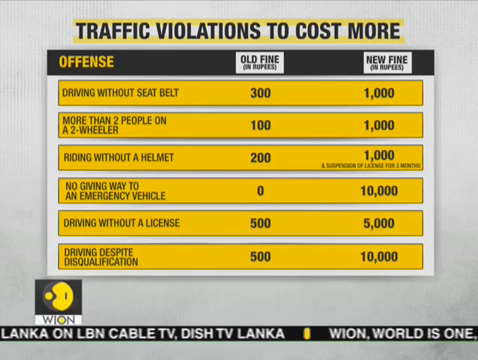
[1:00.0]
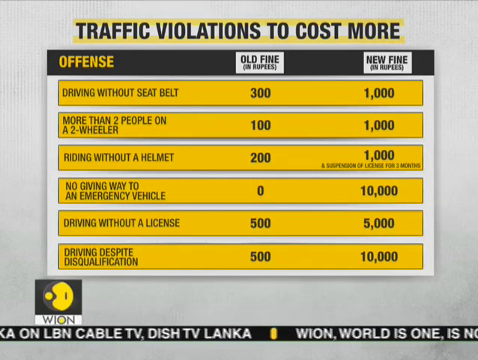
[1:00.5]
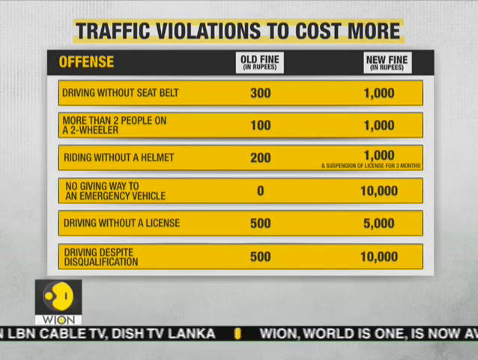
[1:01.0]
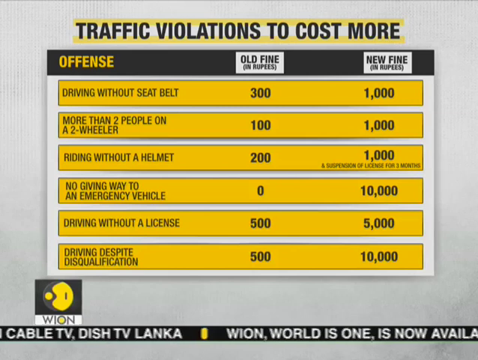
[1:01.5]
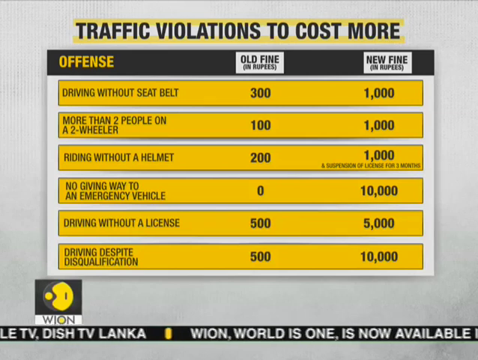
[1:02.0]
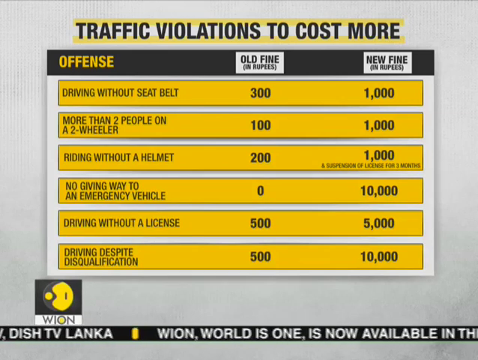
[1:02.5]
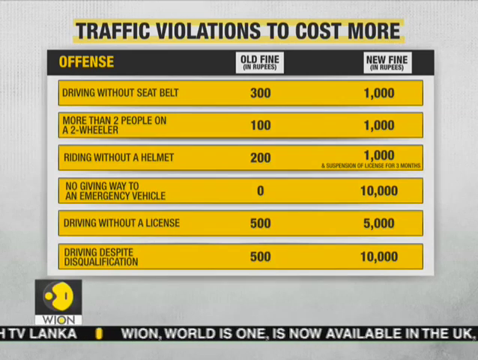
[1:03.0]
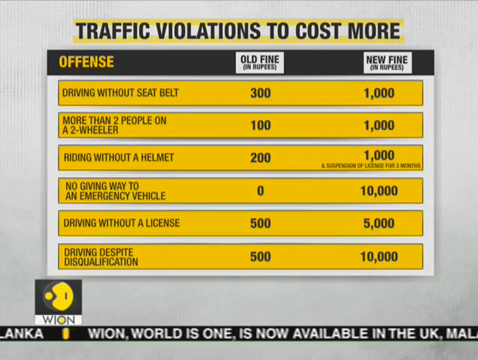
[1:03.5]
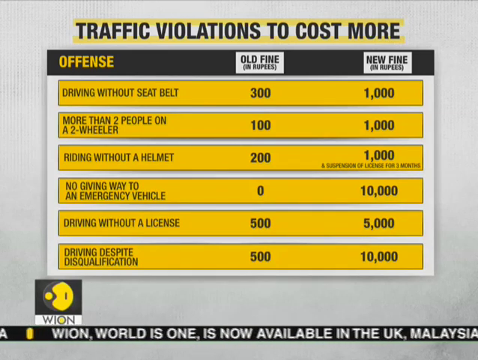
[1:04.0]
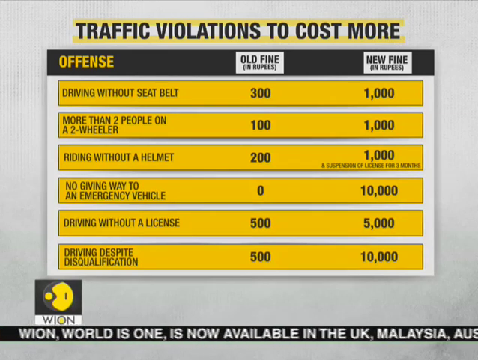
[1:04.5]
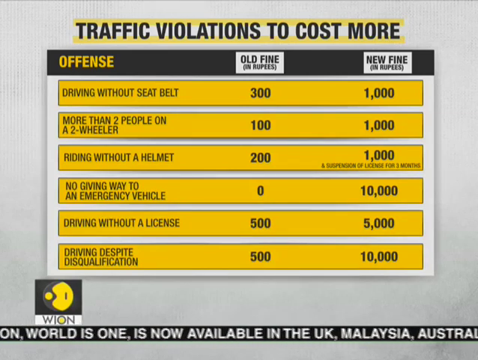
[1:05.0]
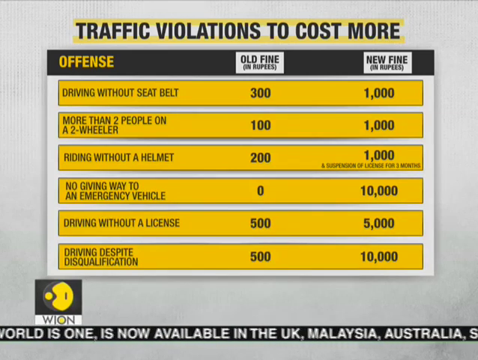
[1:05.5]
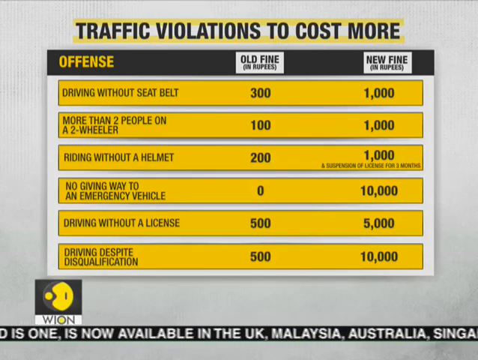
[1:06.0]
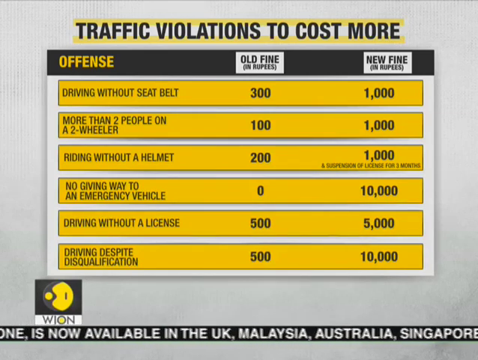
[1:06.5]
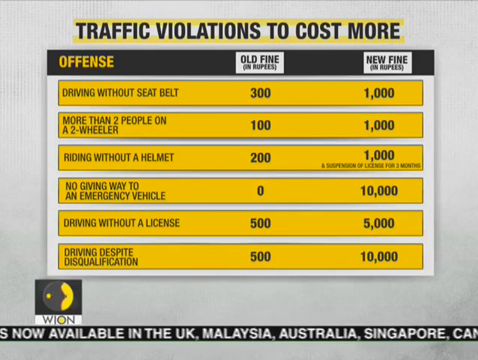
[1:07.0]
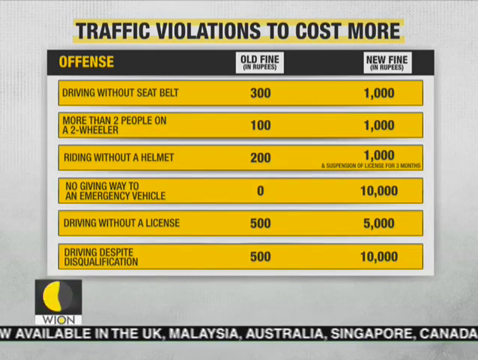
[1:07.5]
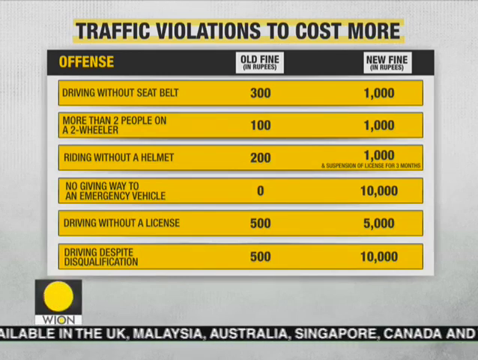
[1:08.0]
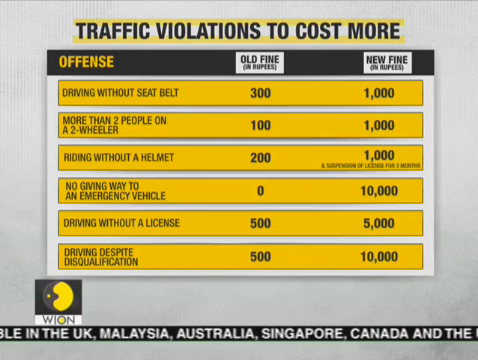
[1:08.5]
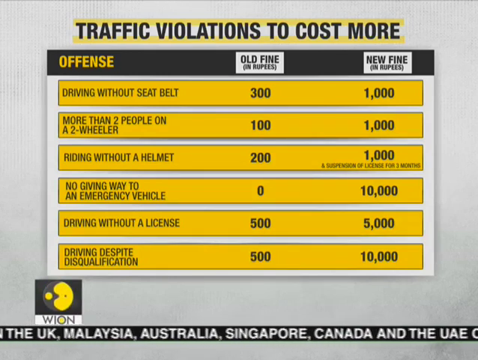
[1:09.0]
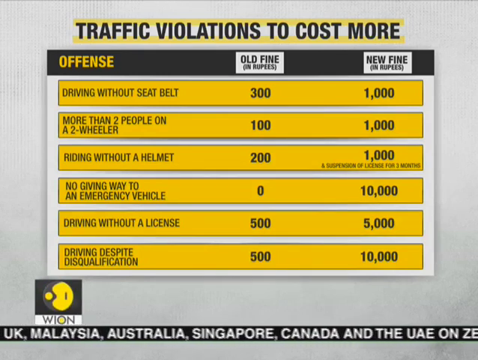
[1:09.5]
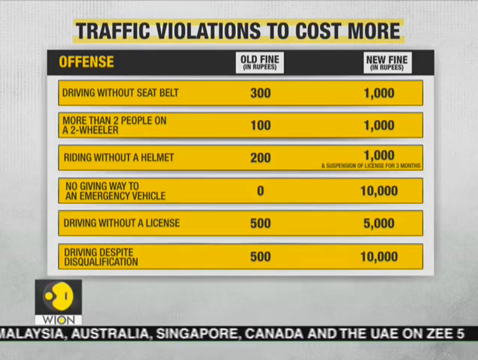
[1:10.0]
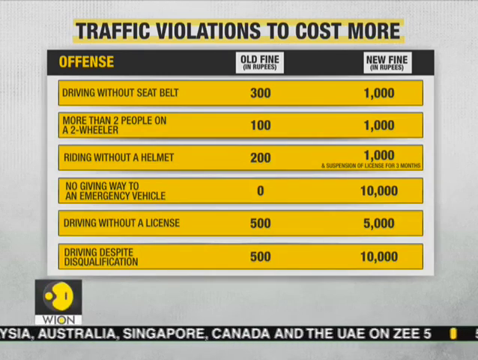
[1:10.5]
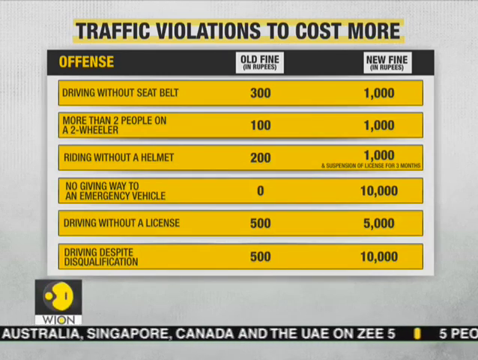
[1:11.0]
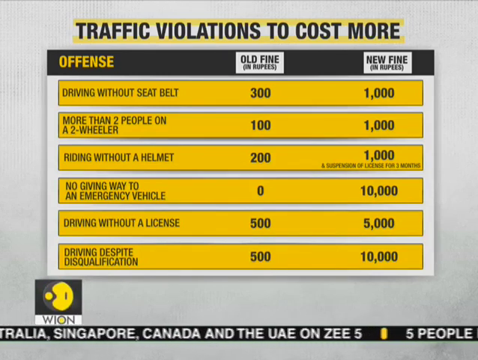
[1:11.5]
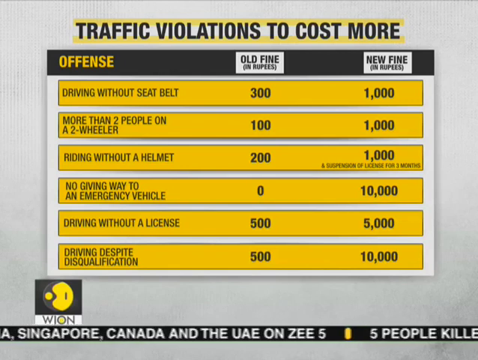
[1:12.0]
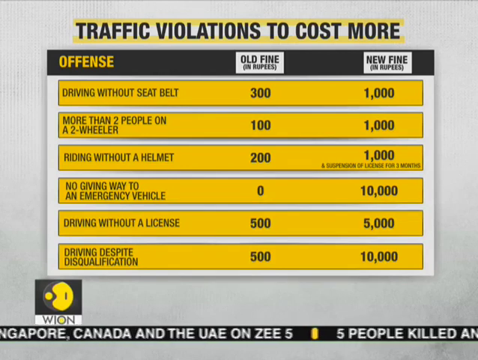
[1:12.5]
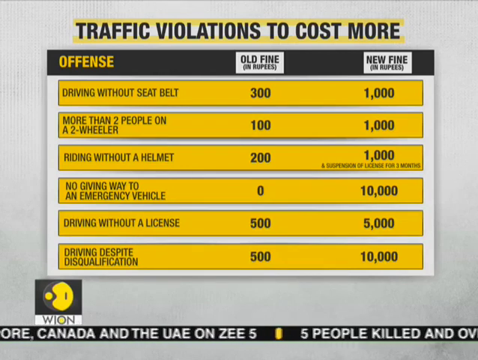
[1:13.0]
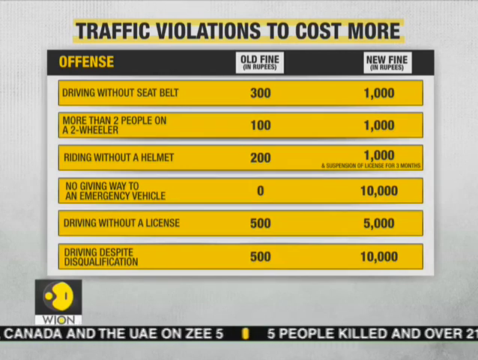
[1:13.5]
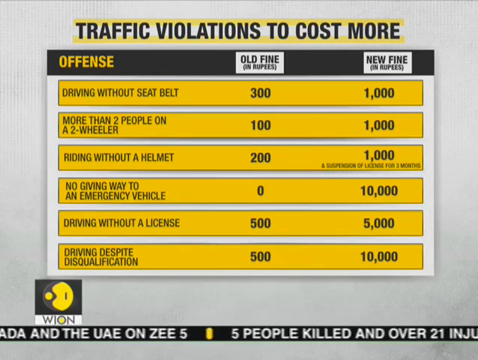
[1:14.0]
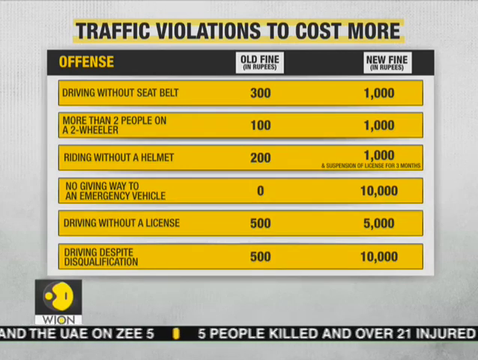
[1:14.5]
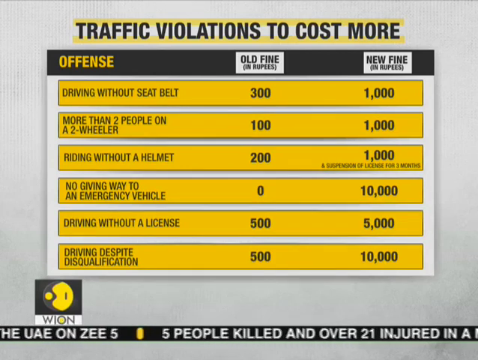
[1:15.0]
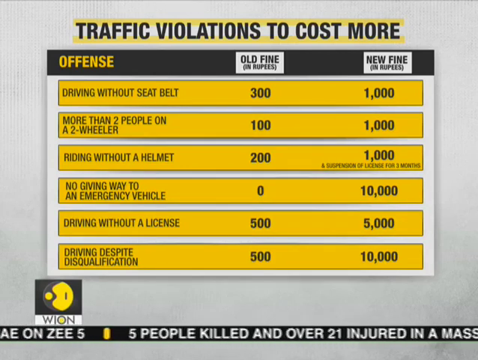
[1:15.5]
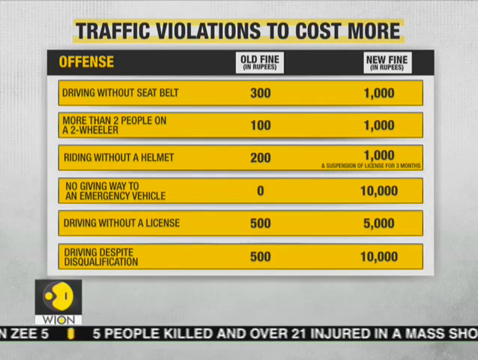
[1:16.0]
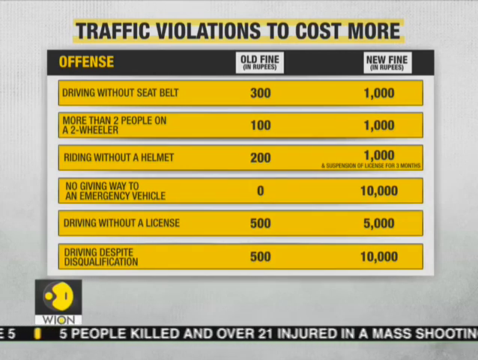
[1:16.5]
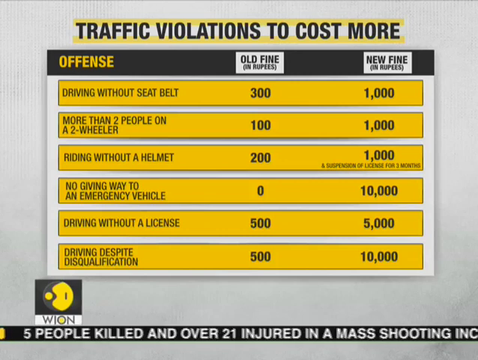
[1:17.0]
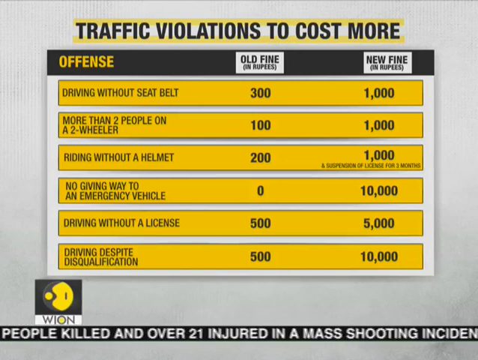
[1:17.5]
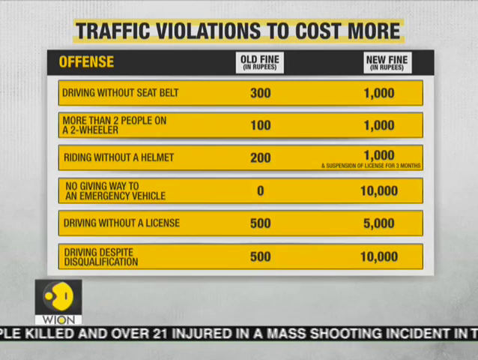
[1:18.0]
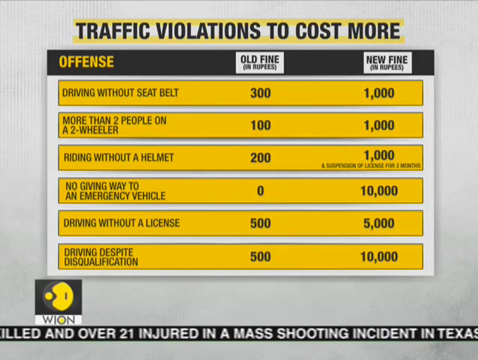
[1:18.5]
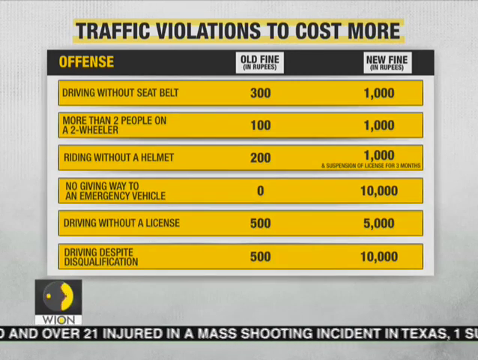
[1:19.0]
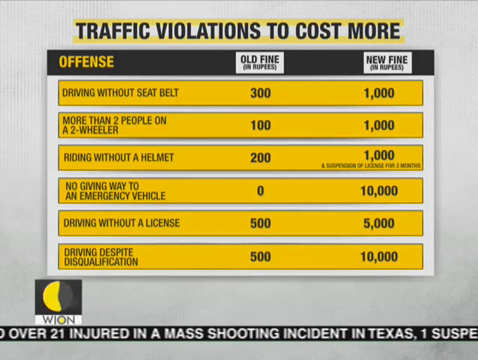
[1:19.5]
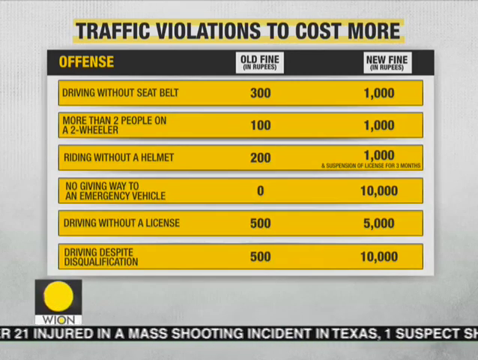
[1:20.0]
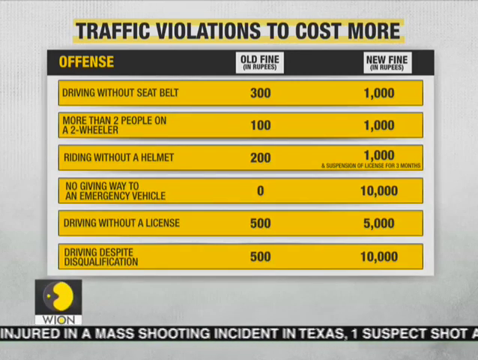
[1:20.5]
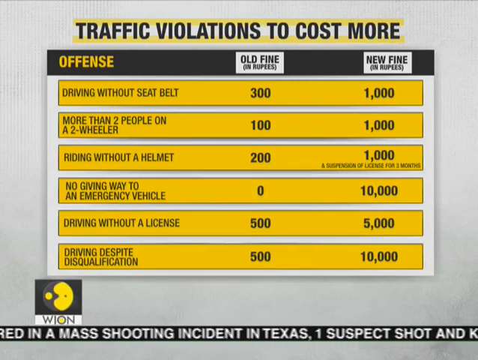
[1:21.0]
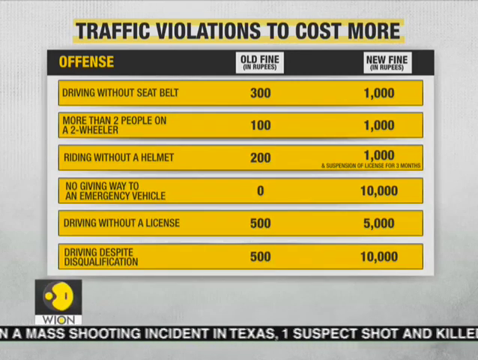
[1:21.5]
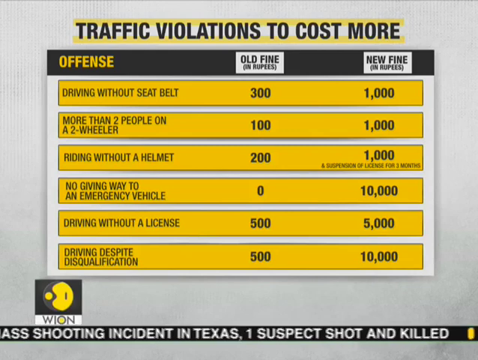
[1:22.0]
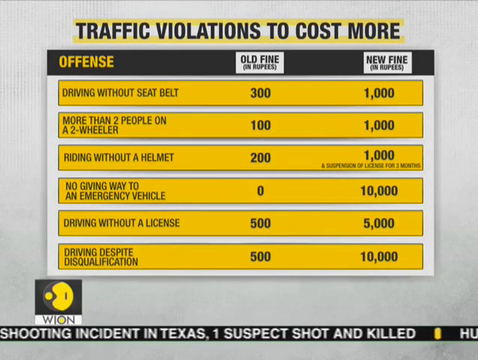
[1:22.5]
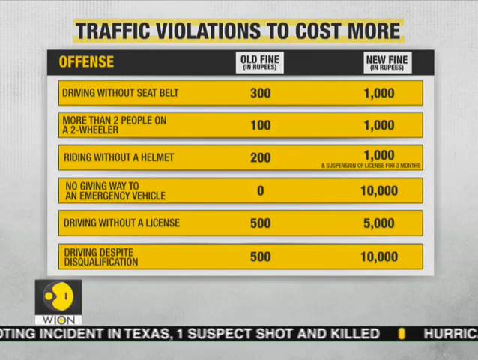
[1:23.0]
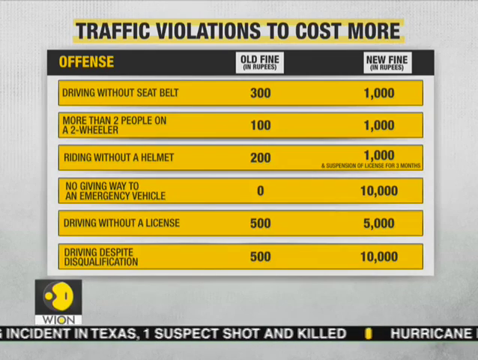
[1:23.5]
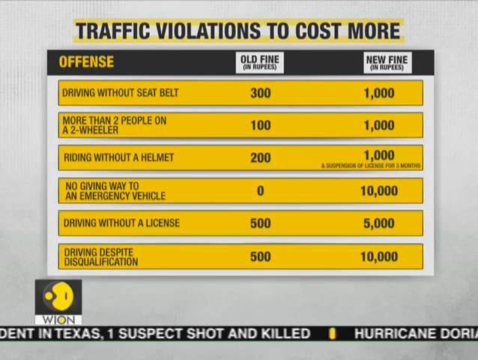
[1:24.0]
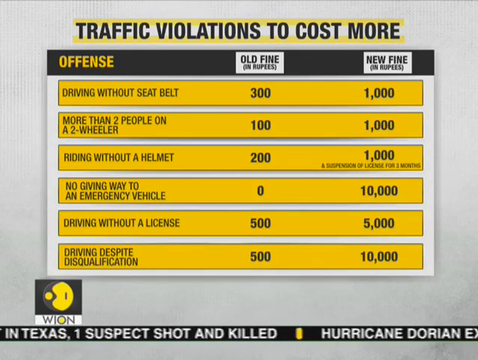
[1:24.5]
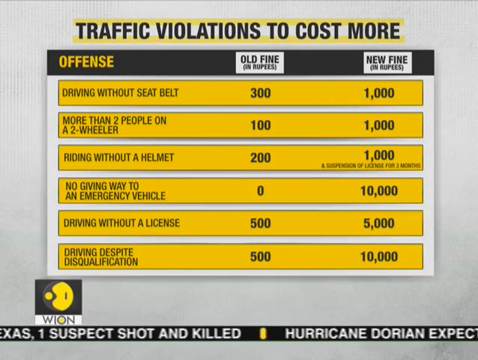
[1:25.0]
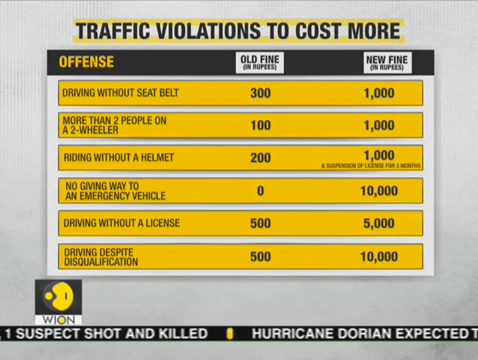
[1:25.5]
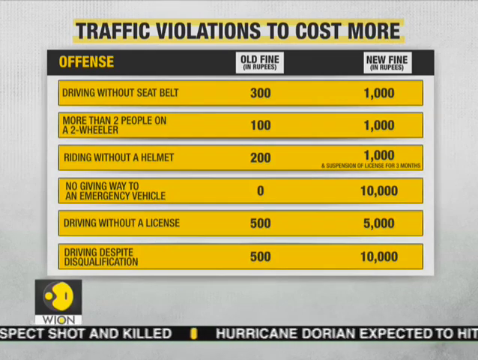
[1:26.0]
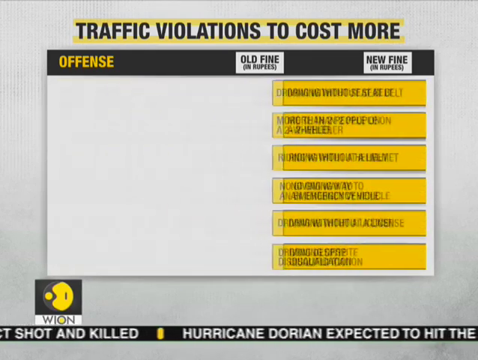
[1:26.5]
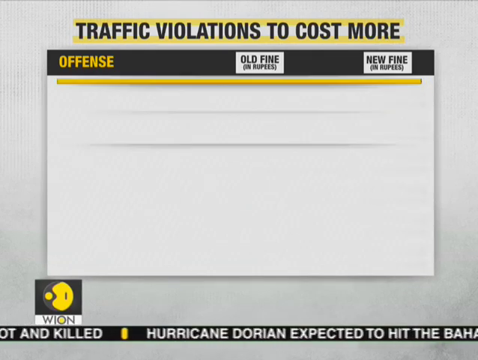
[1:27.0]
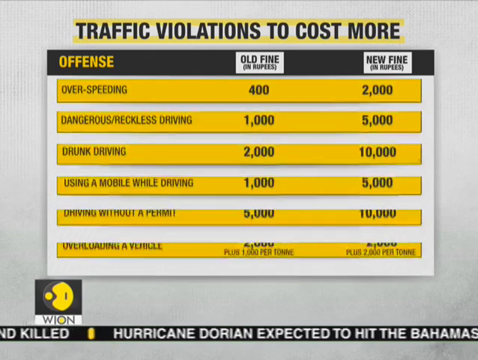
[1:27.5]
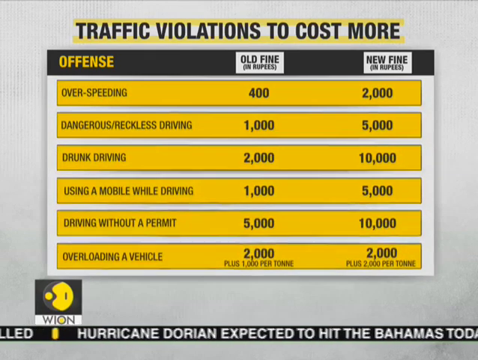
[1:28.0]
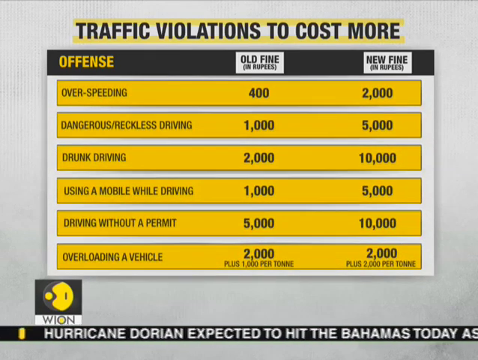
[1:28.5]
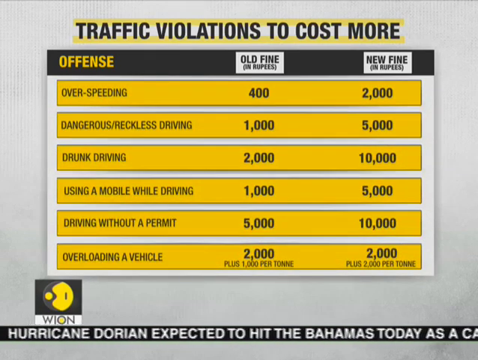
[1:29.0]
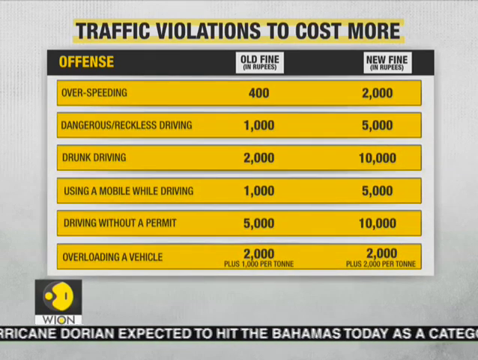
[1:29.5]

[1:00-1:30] The page reading "traffic violations to cost more" is shown, with the words in bold black. At the bottom, "offense" is written in yellow; on the right are the old fine and the new fine, with the sums of money listed downward, and on the left the names of the offenses are written. Words scroll along the bottom of the screen, including "now available in the UK Malaysia Australia Singapore Canada and the UAE," "five people killed and over 21 injured in a mass shooting incident in Texas," and "one suspect shot and killed."